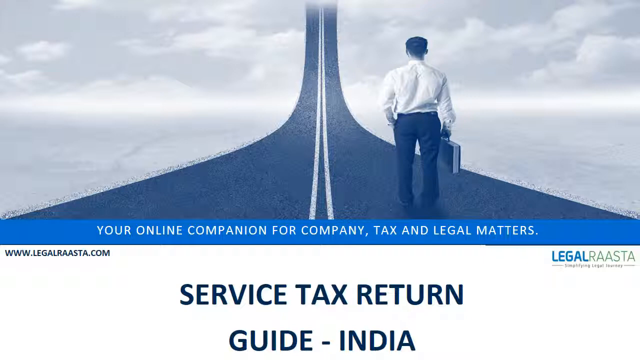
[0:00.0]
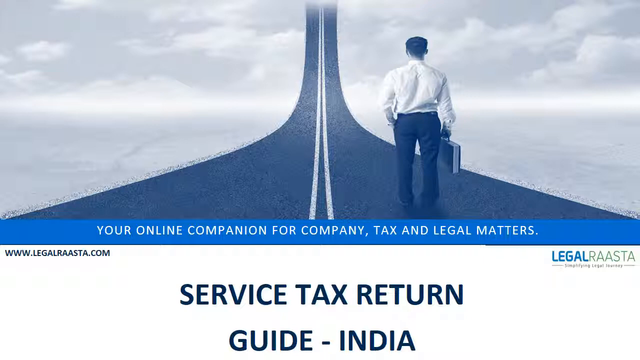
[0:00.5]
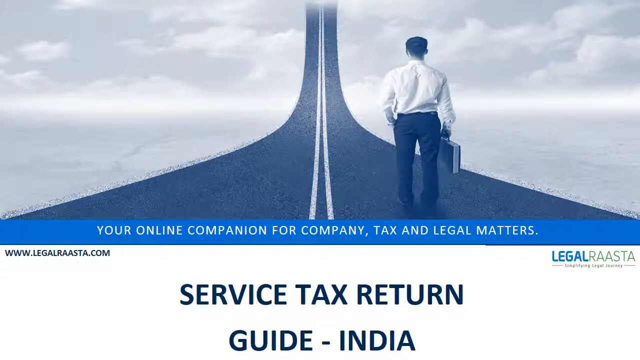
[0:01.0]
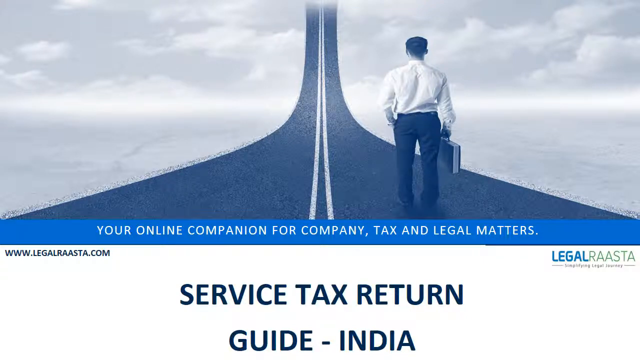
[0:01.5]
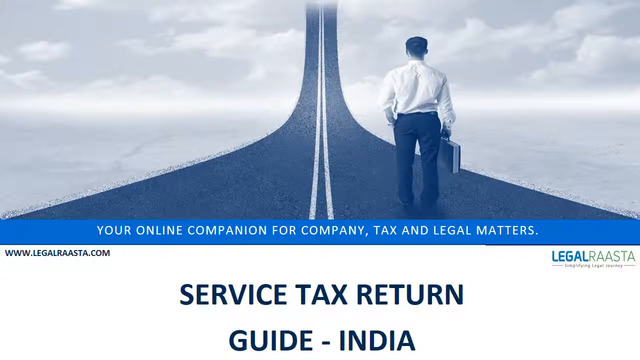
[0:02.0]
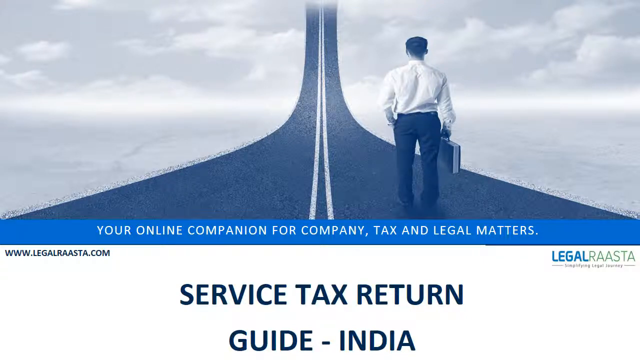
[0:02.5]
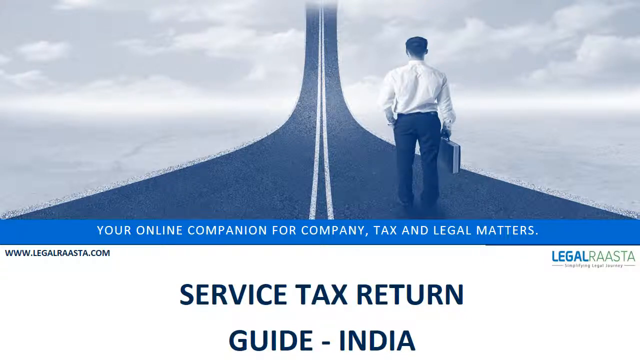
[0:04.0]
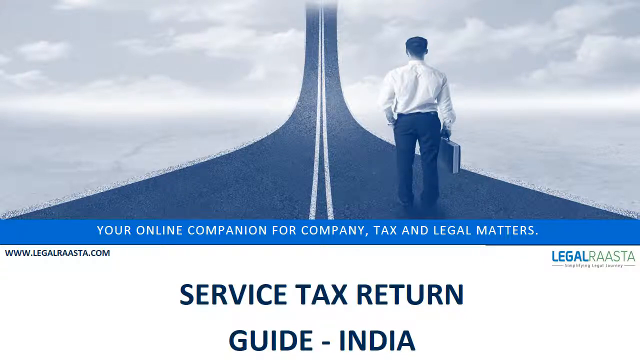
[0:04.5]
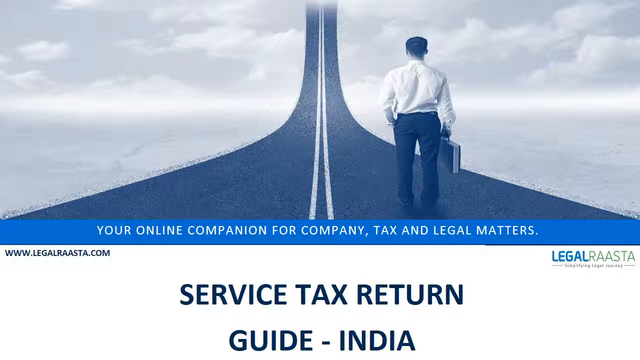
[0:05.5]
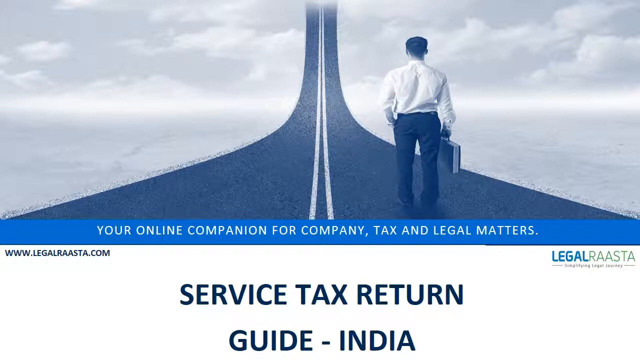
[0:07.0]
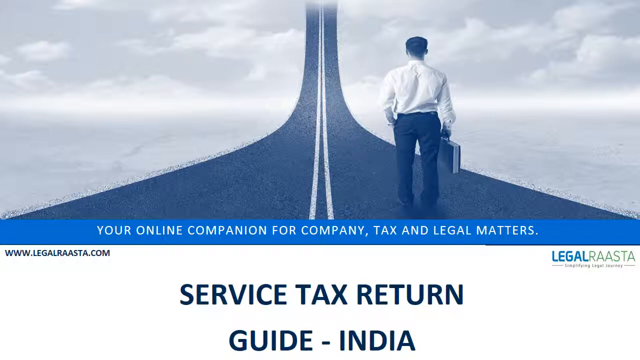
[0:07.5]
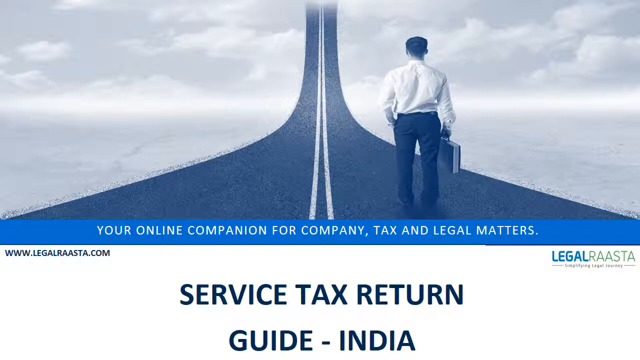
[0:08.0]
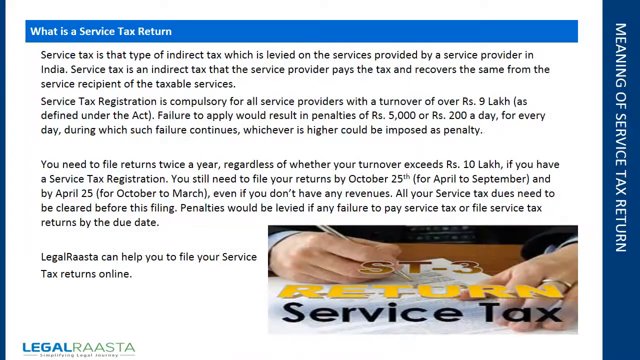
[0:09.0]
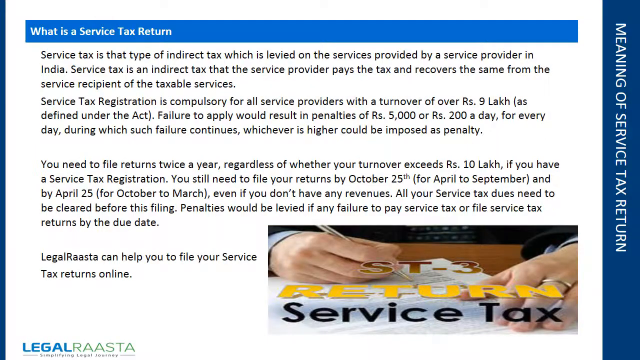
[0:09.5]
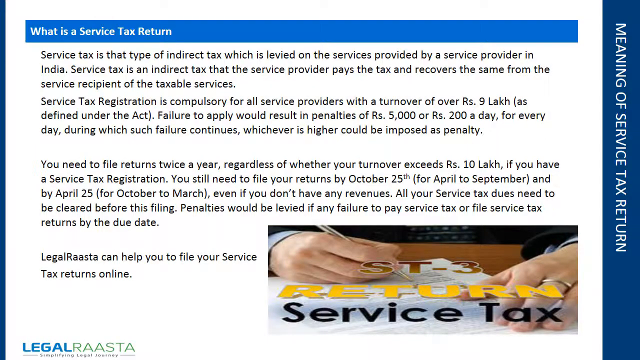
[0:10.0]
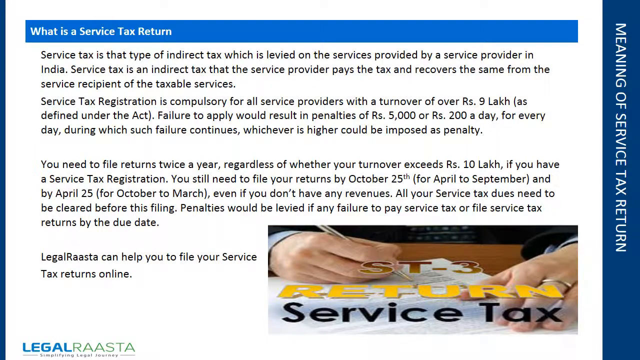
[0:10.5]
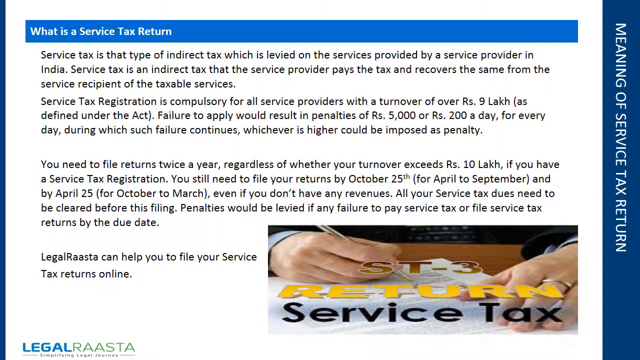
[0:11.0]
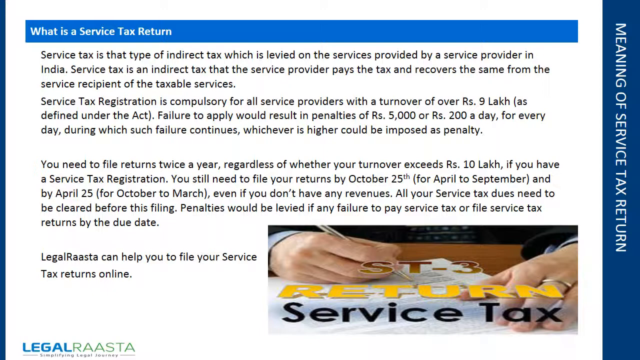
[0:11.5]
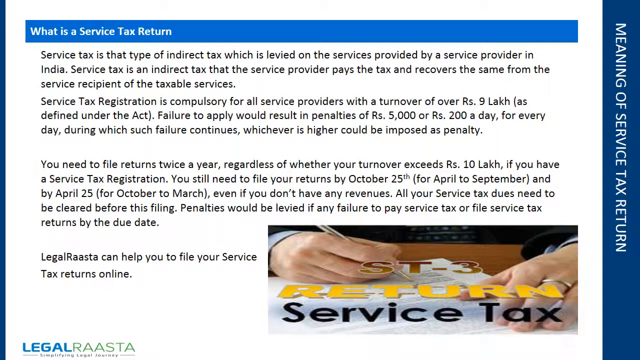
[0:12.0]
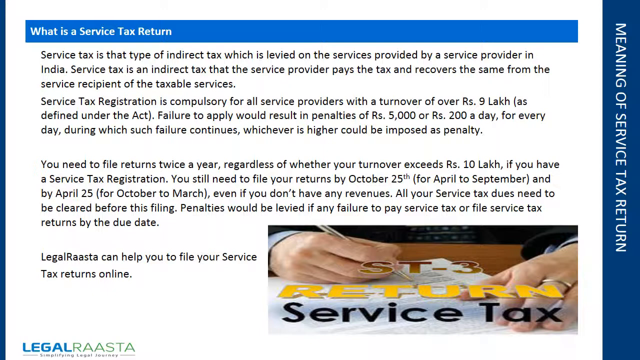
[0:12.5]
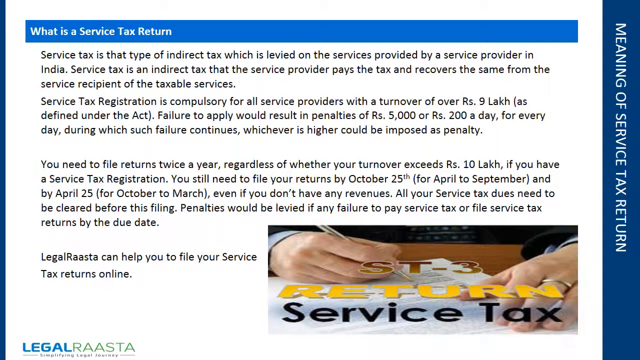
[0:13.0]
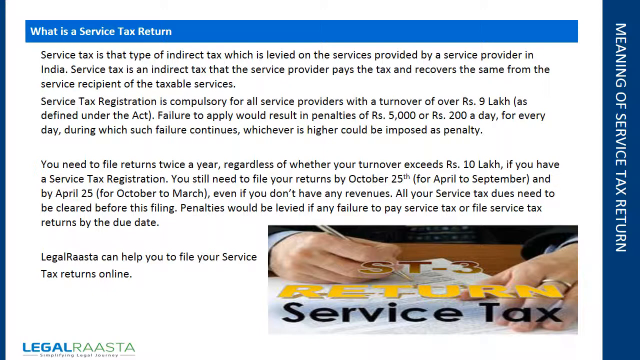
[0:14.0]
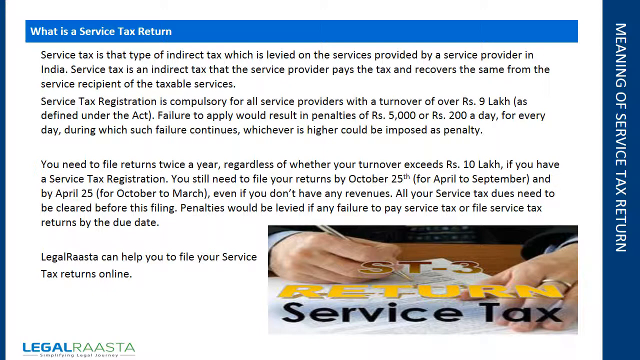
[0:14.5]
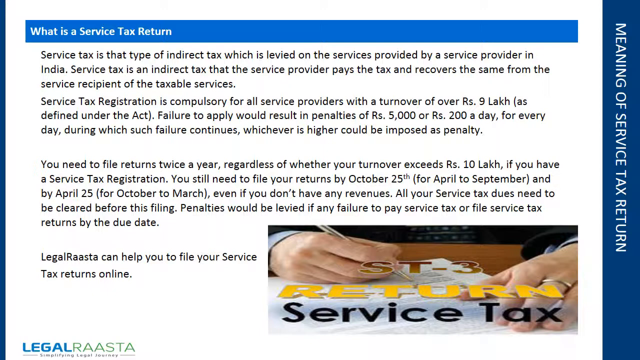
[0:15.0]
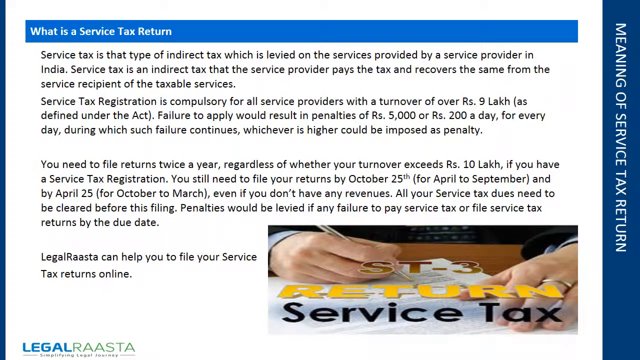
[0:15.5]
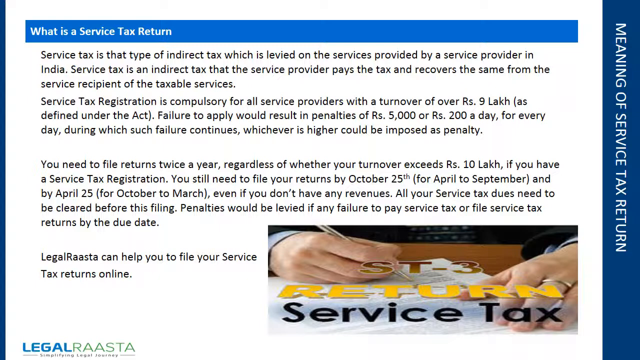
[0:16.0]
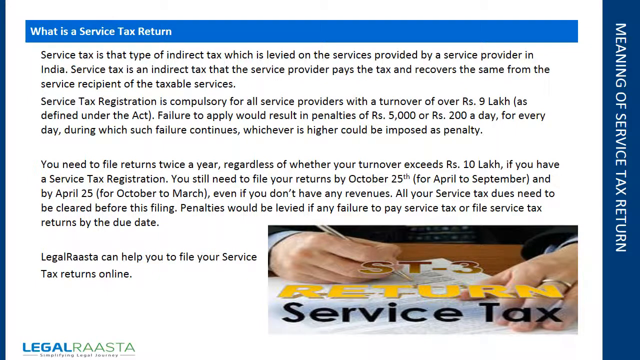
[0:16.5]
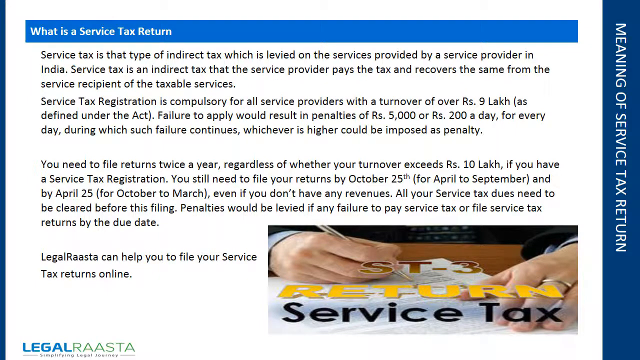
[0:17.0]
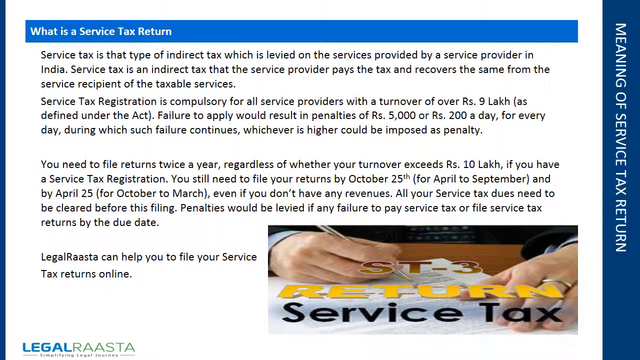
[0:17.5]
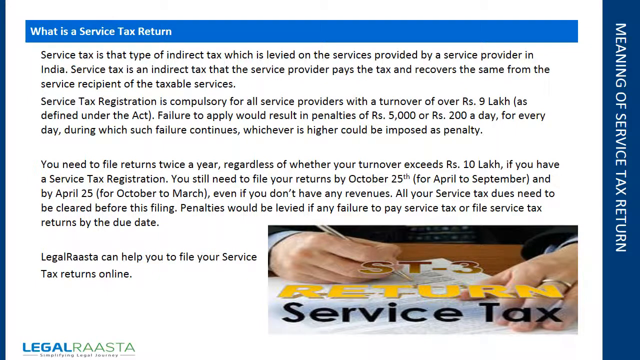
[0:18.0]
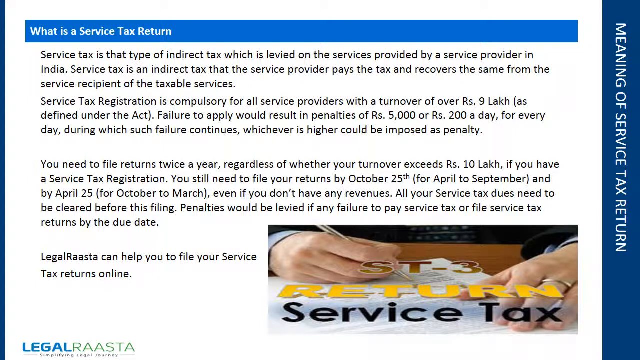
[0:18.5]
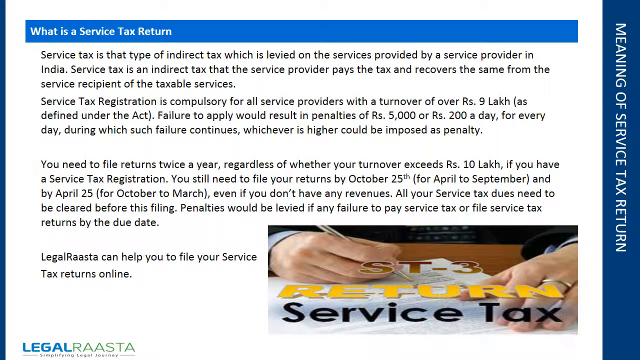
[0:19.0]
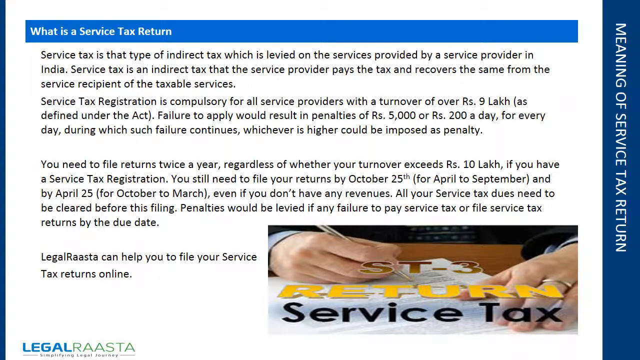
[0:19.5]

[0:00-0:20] A slide shows a large image of a road that looks like it goes off into the distance; at the end it kind of curves up and then goes vertically into the sky. A man is seen from behind, standing on the right side of the road, wearing a white long-sleeve button-up shirt and dark slacks and holding a briefcase. Beneath the image is a blue border with white letters reading "your online companion for company, tax, and legal matters." Below the blue border, at the far left in small black font, is the website "www.legalraasta.com." At the far right, beneath the blue rectangular box, it reads "legal raasta," with "legal" in blue and "raasta" in green, and below that in small black letters, "simplifying legal journey." At the bottom of the page, large dark blue text reads "service tax return guide - india." The slide then changes: a small blue header box runs across the top of the page with small white letters reading "what is a service tax return?" Beneath it, small black text gives information on what service tax is, how service tax registration works in India, the costs, and the thresholds that require filing returns. At the bottom right is an image of a close-up of someone's hand signing some kind of white document on a desk, with the words "ST-3 return service tax" over the image. In the right-hand margin of this slide is a vertical dark blue block with the text "meaning of service tax return" in white font.